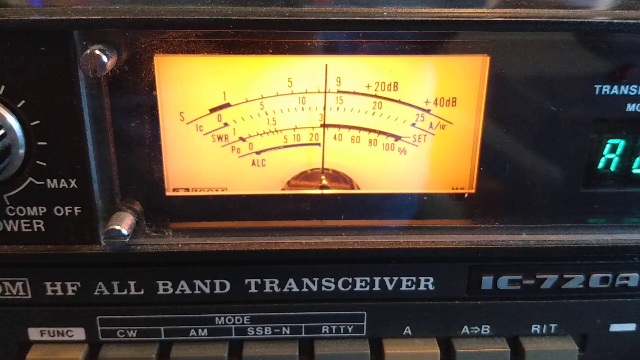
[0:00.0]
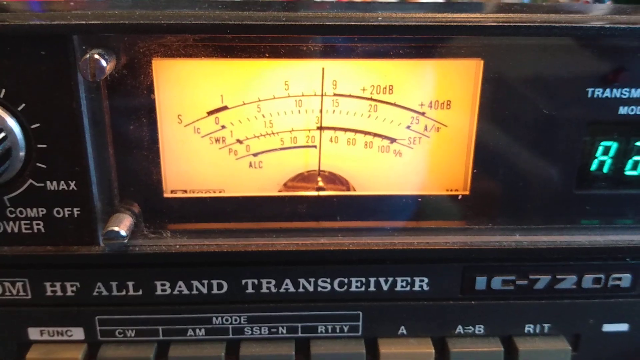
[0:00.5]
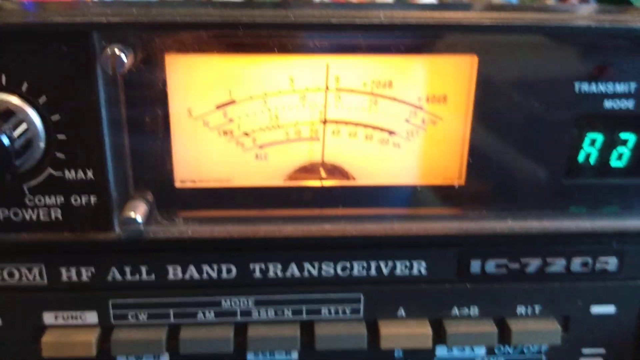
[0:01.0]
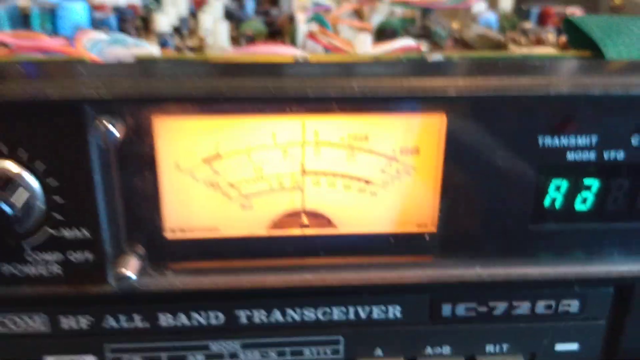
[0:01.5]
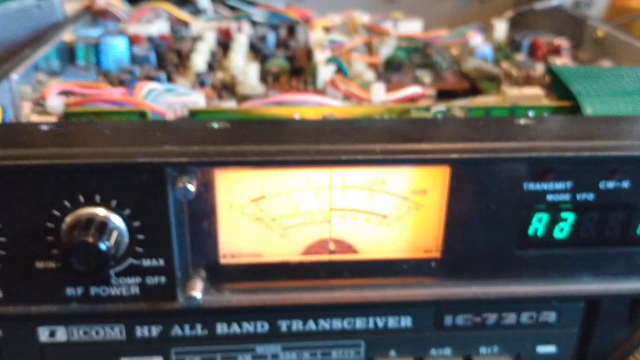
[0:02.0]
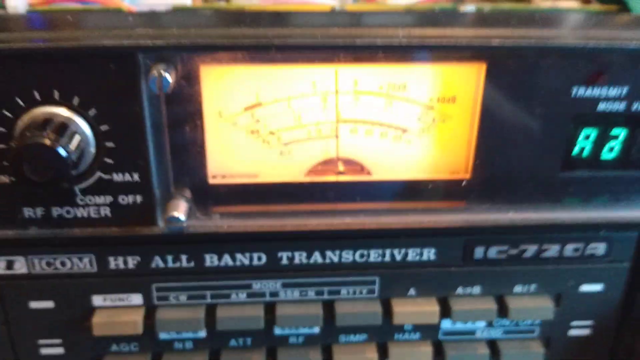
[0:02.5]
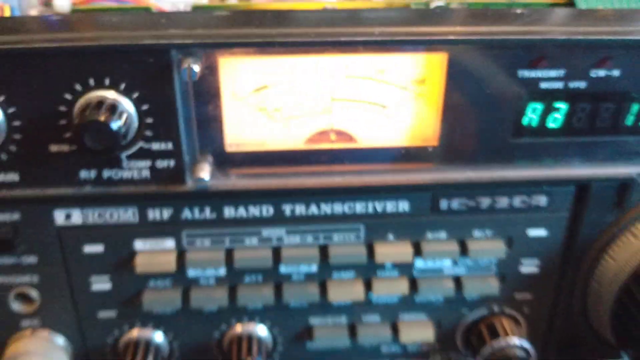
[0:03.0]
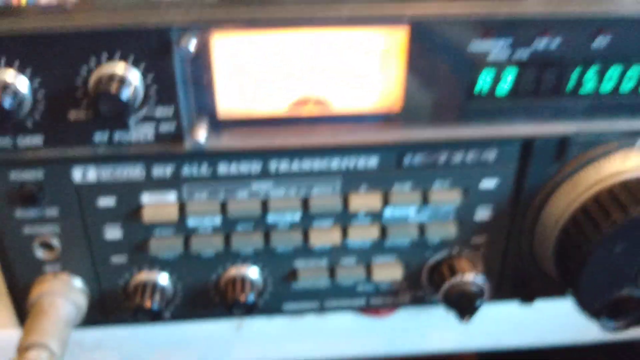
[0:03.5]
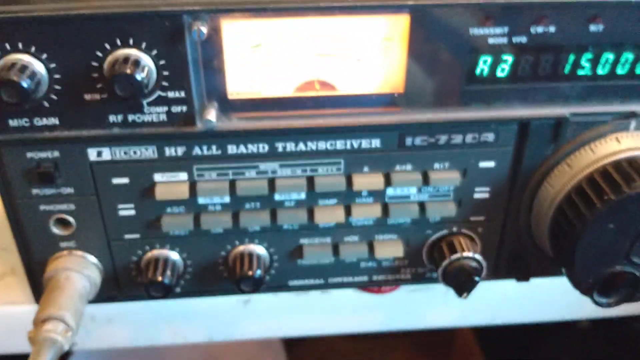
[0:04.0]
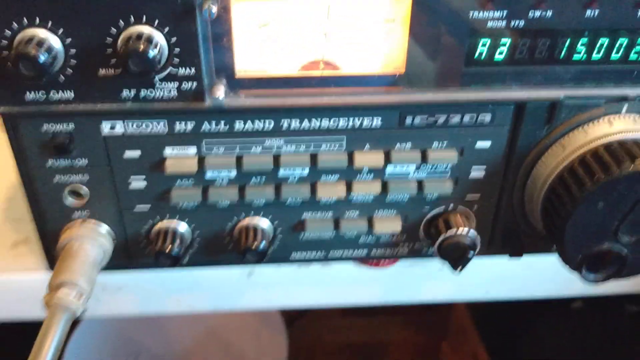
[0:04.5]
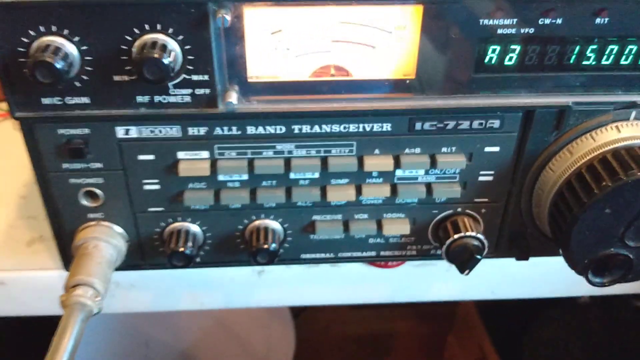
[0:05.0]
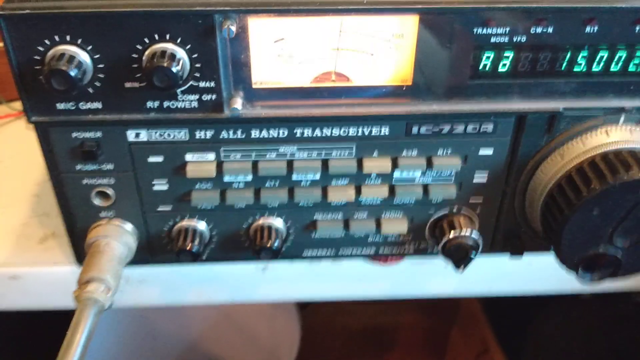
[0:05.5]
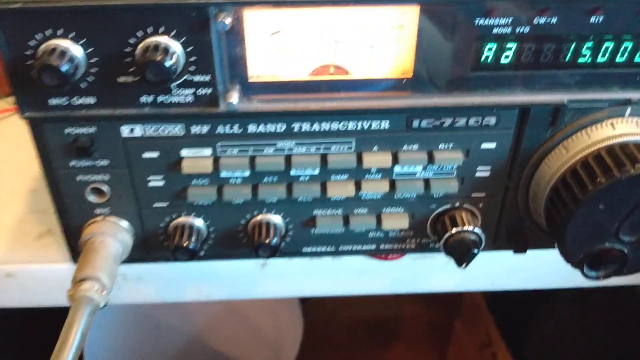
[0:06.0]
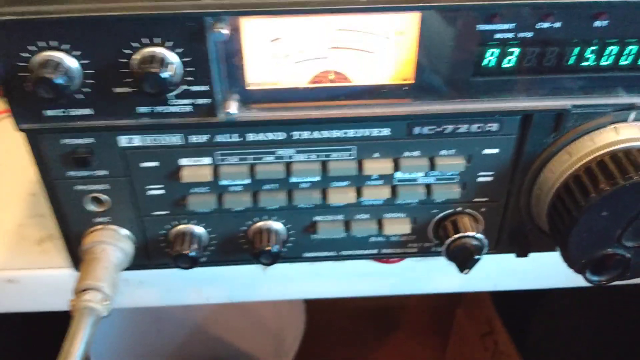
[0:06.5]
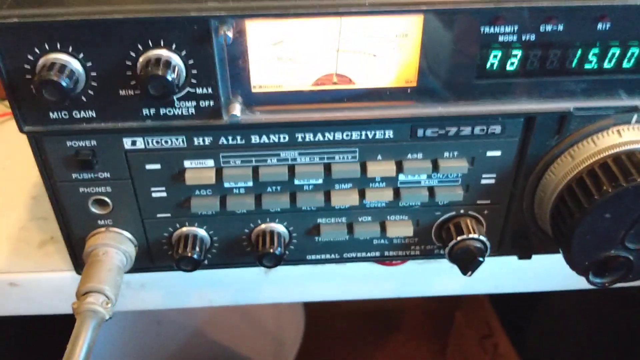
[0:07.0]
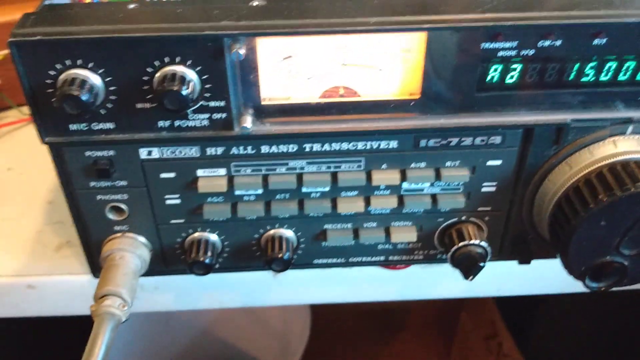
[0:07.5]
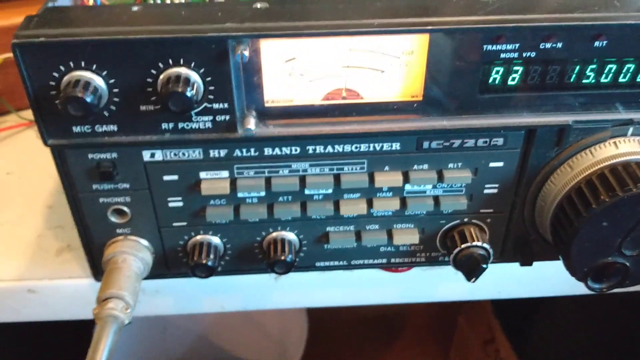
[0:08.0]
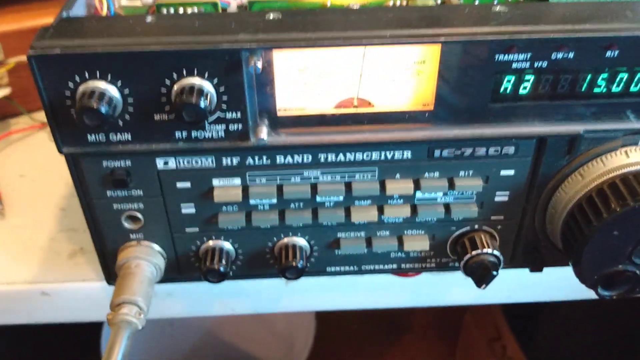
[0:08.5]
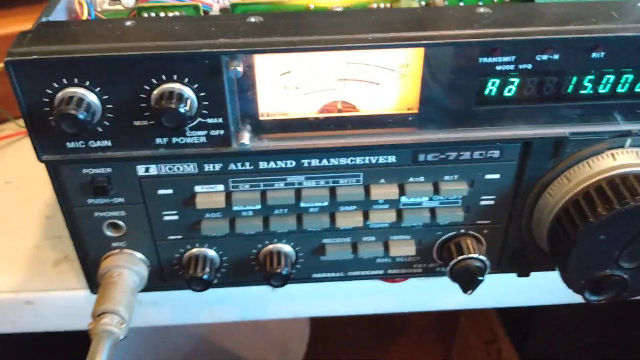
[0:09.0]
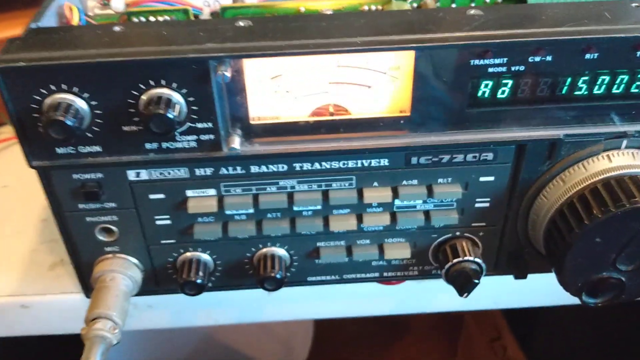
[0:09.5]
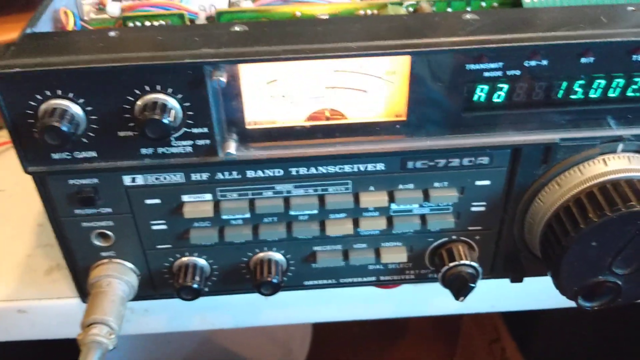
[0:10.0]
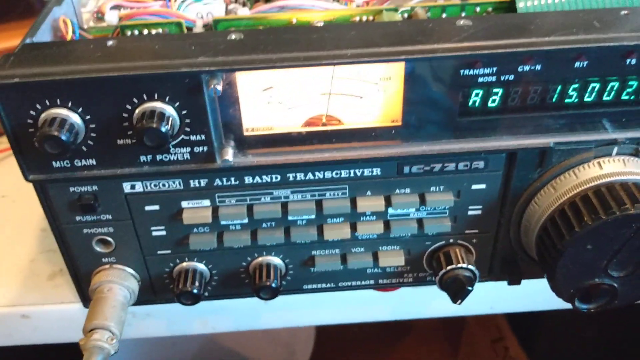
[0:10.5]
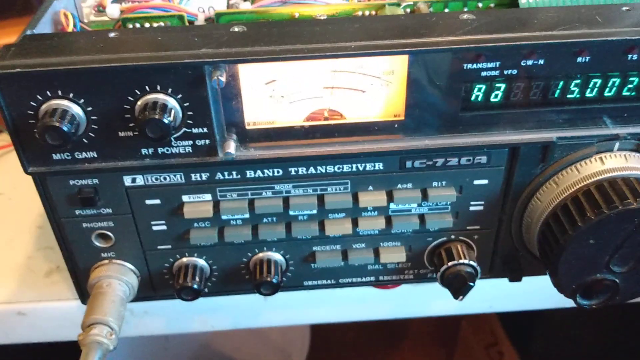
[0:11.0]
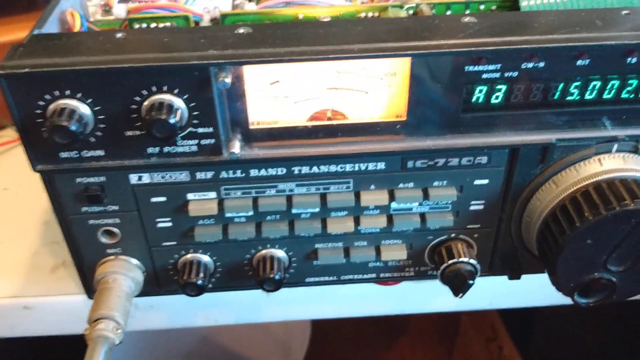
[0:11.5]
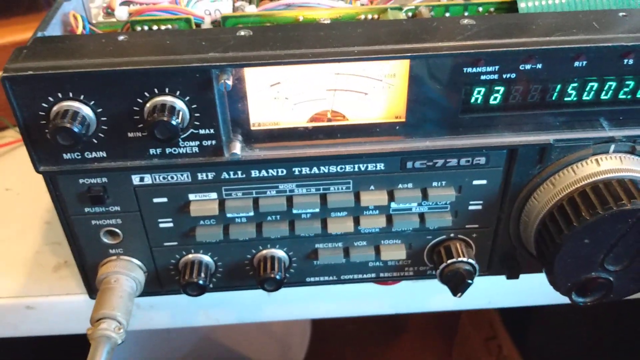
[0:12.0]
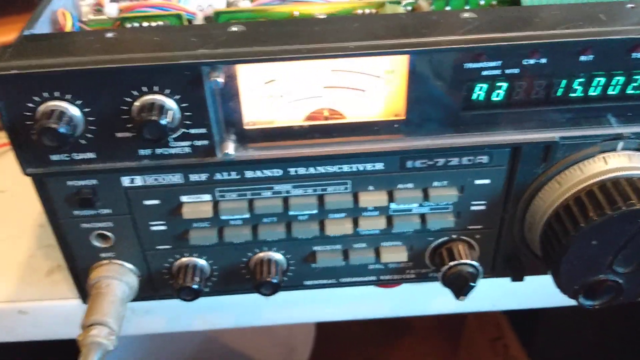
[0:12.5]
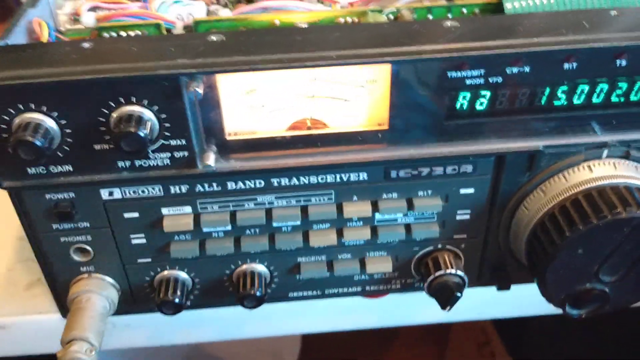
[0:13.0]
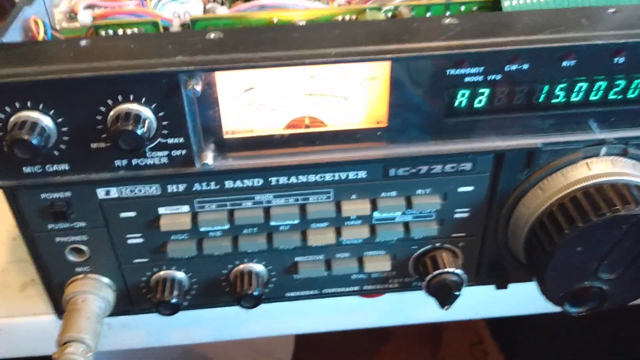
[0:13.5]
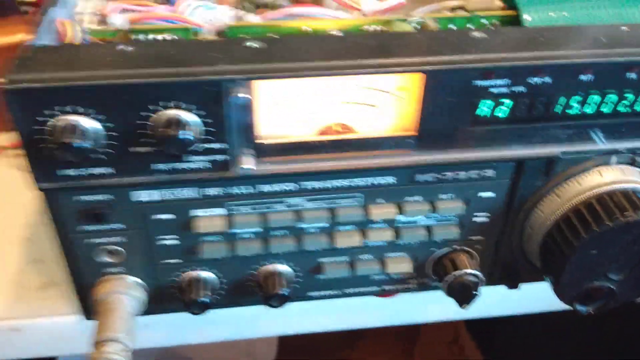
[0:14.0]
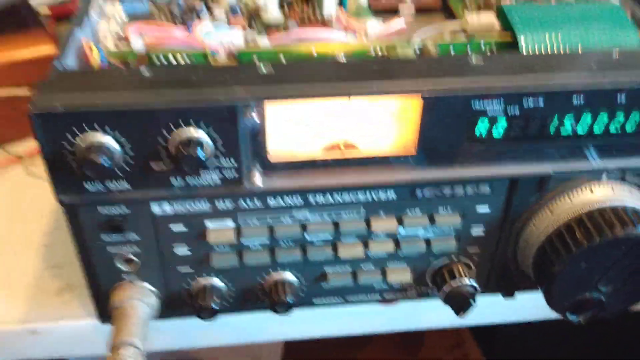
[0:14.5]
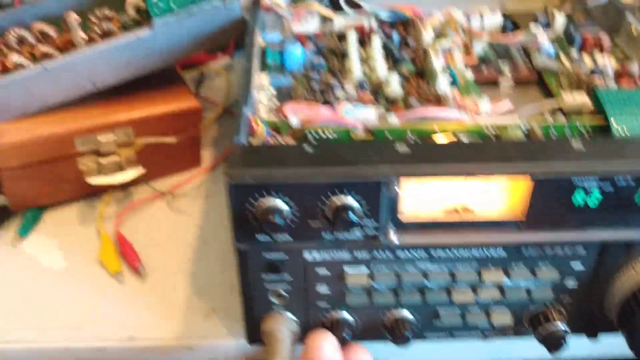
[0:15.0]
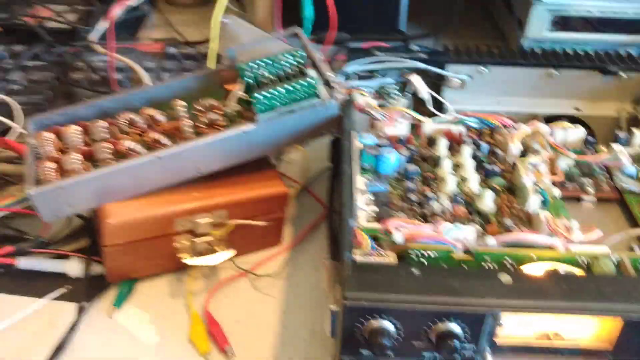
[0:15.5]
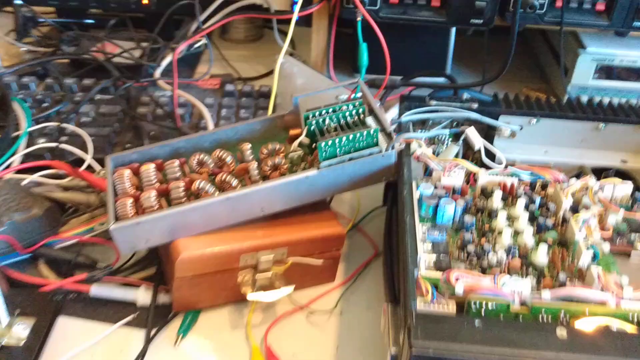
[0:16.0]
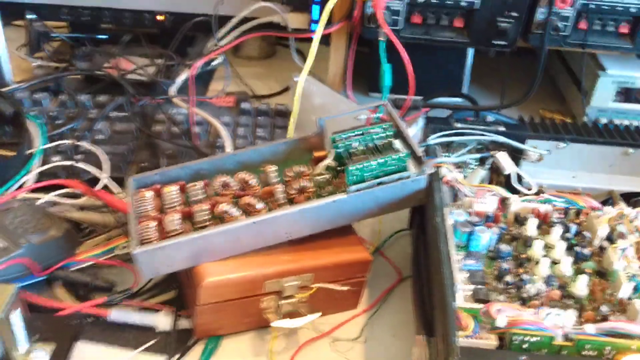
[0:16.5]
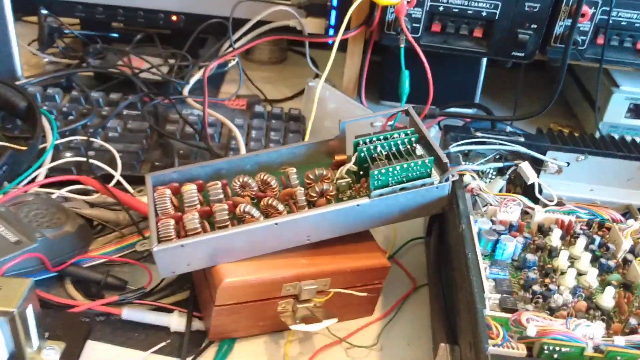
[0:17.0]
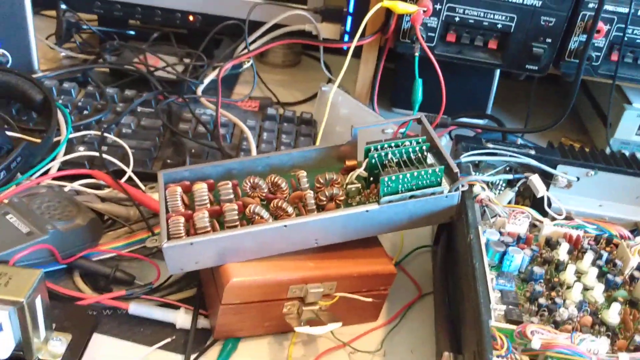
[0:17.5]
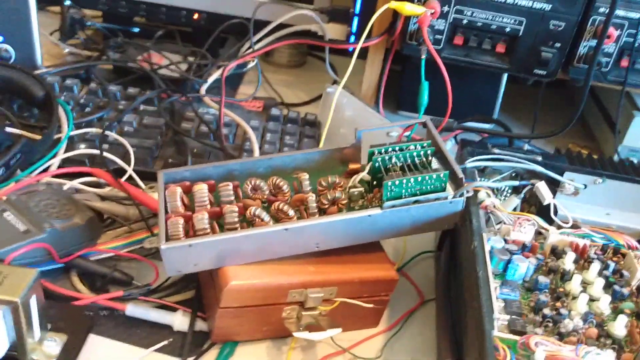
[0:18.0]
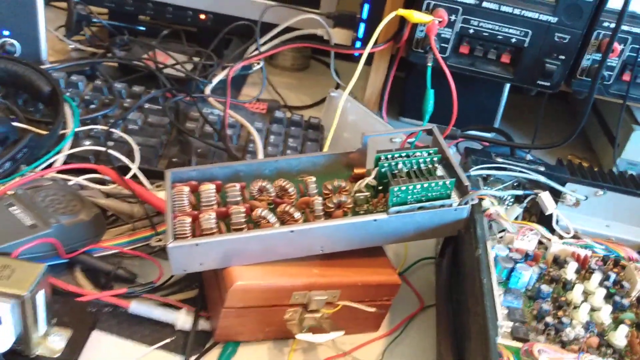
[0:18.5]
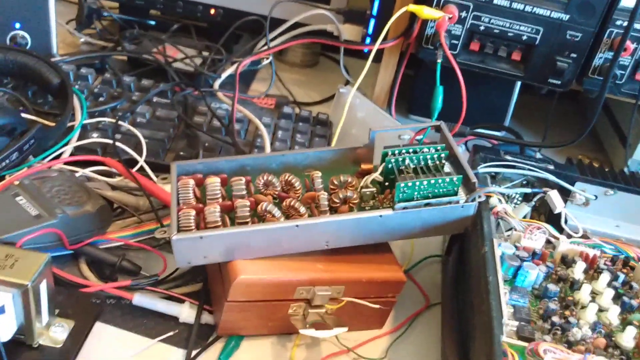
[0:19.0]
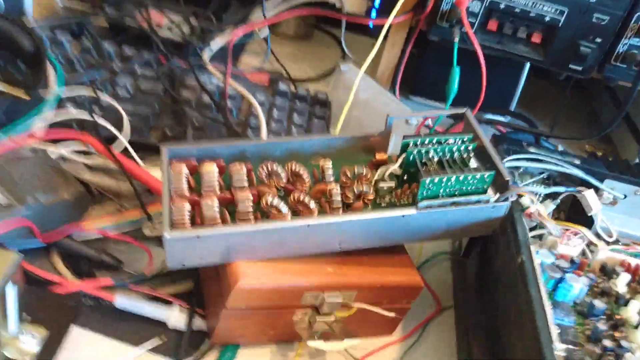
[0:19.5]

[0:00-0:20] The video opens on a close-up of some kind of radio device. As the camera zooms out a little, the text "HF all-band transceiver" is visible at the bottom. A glowing yellowish-orange rectangle is in the middle of the device, with an orange dial in the middle of it that can go left and right. On the far left are two dials, one labeled "RF power" and the other "mic gain". Below the orange glowing indicator section are several buttons and plugs for plugging things in. There are dials and knobs, and a digital display on the right. The camera is kind of shaky, zooming in and out repeatedly, which makes the text on the front of the device hard to make out. The device is a black box that appears somewhat shallow because the lid has been taken off, so its face is very thin. Some wires and circuit boards are faintly visible at the top where the lid has been removed. A rather large knob is on the far right.